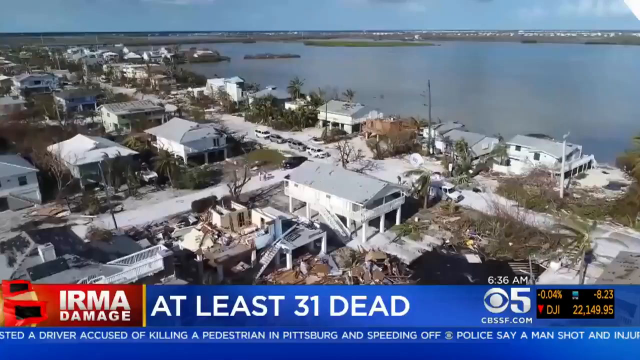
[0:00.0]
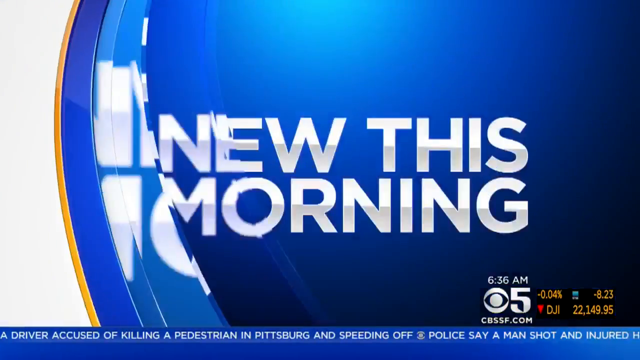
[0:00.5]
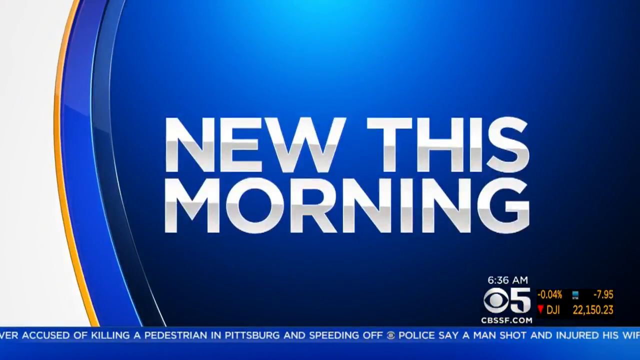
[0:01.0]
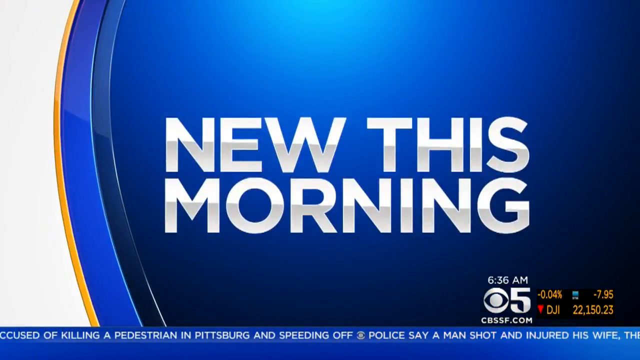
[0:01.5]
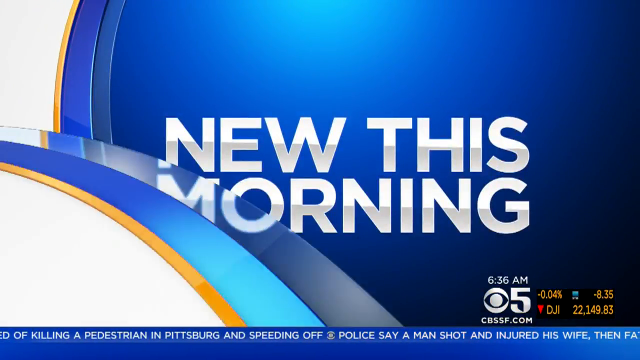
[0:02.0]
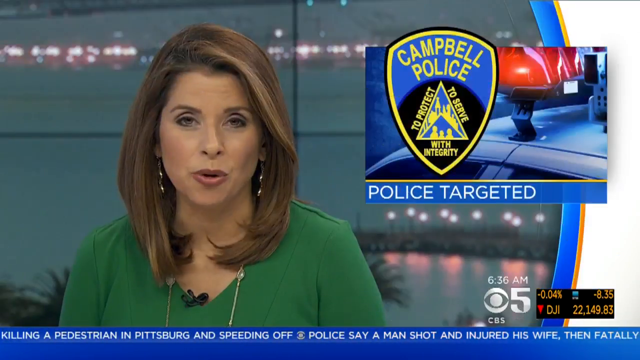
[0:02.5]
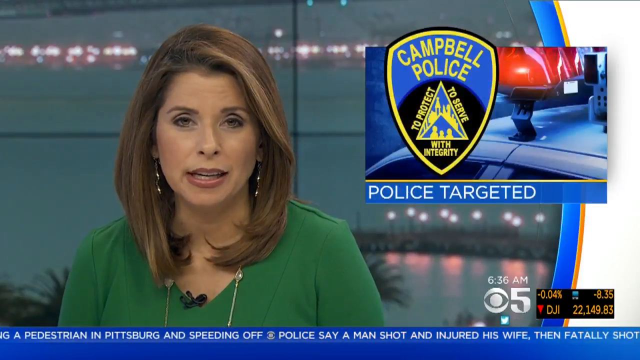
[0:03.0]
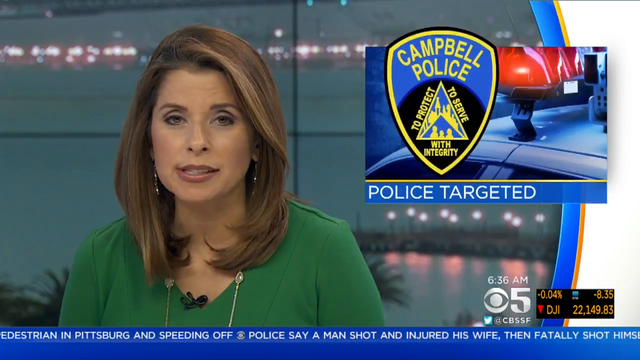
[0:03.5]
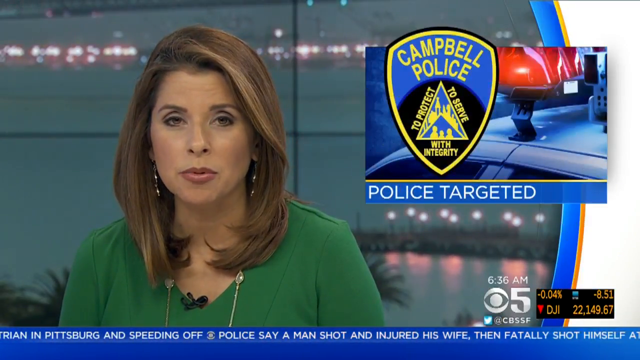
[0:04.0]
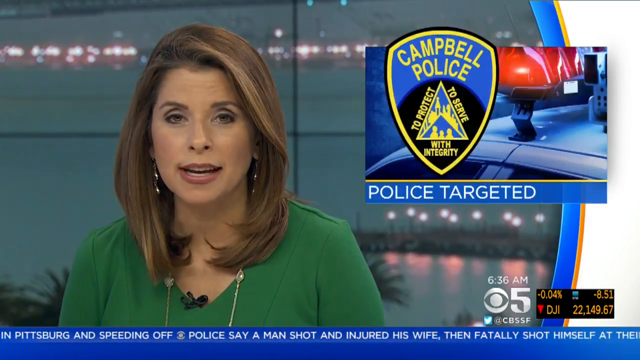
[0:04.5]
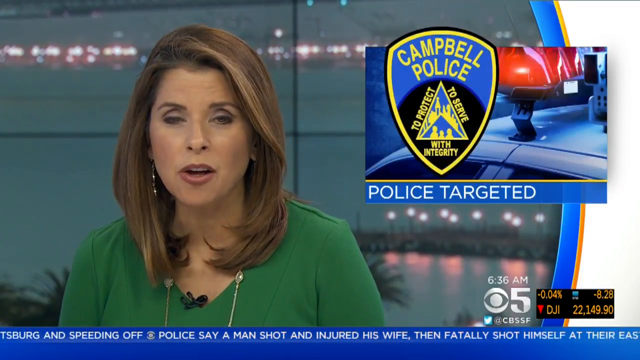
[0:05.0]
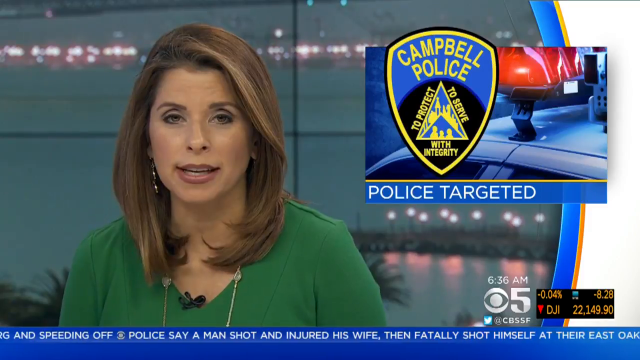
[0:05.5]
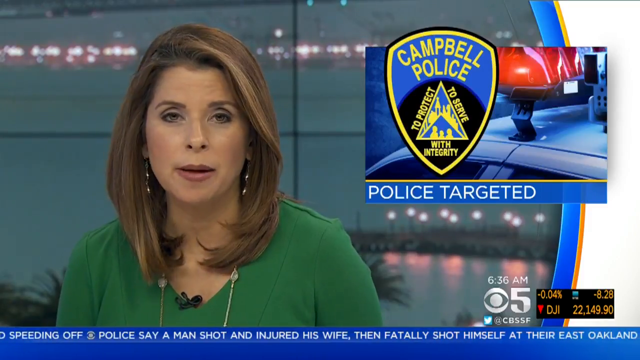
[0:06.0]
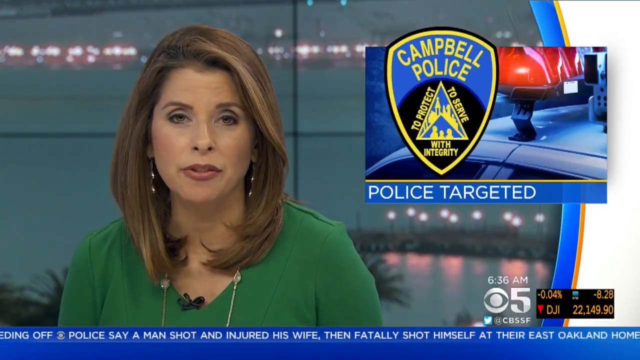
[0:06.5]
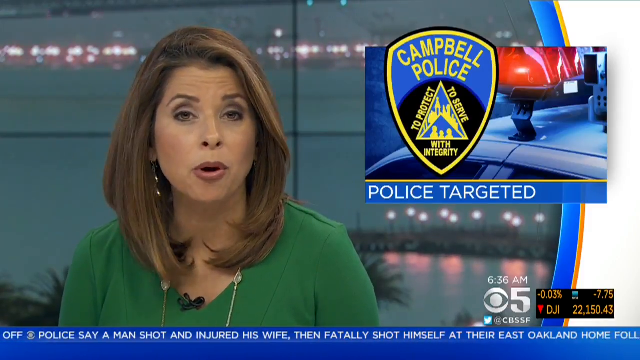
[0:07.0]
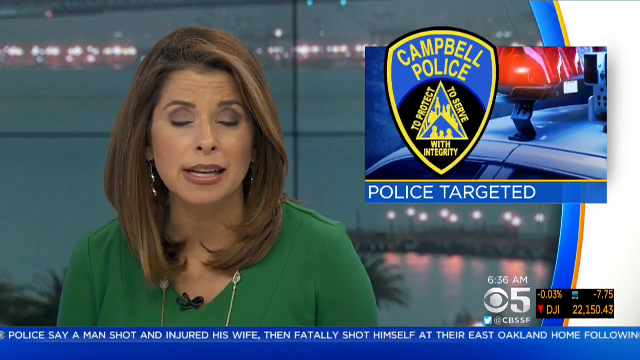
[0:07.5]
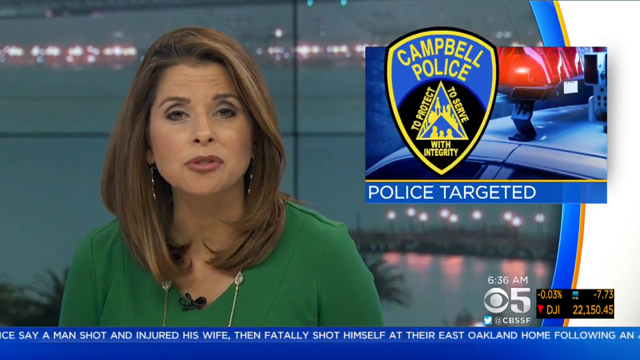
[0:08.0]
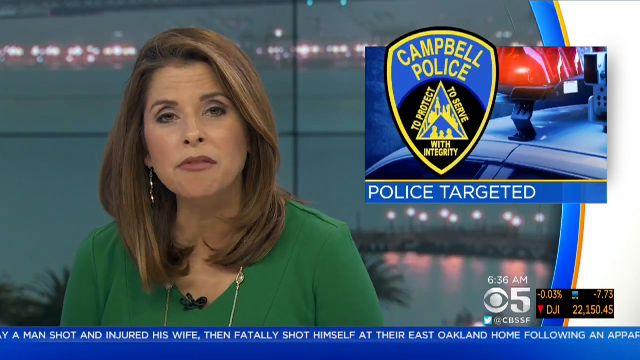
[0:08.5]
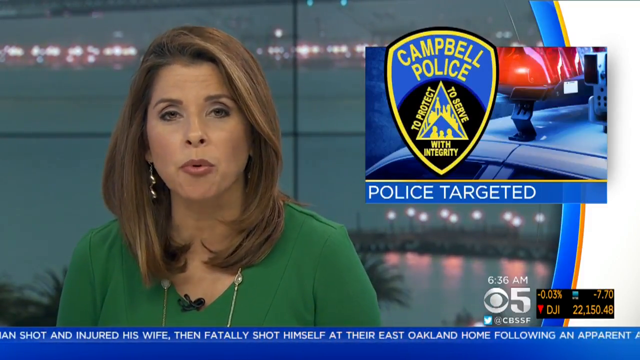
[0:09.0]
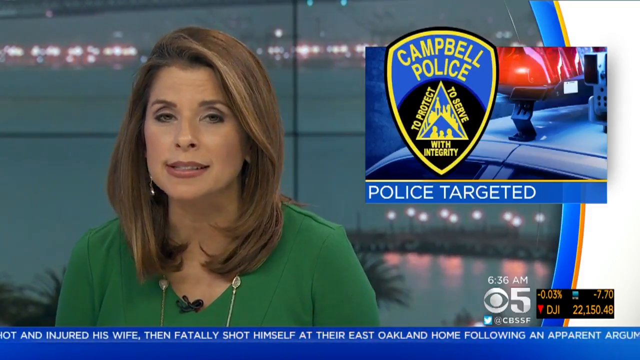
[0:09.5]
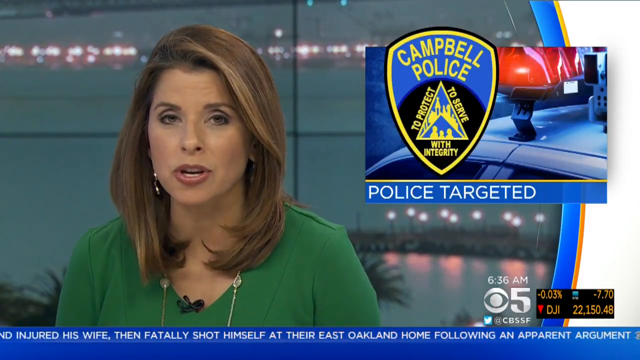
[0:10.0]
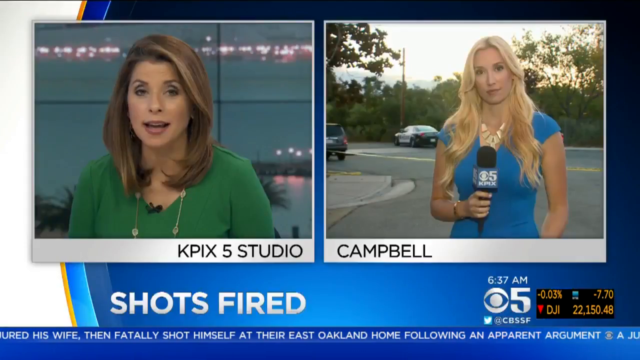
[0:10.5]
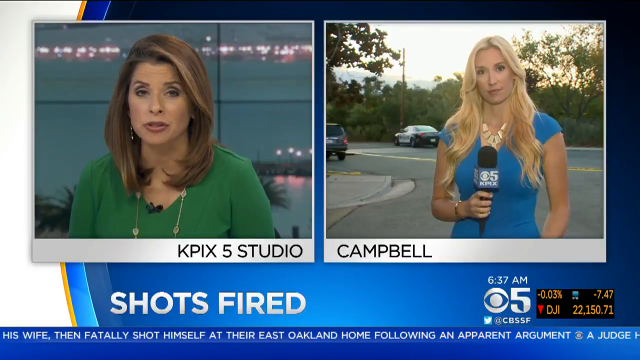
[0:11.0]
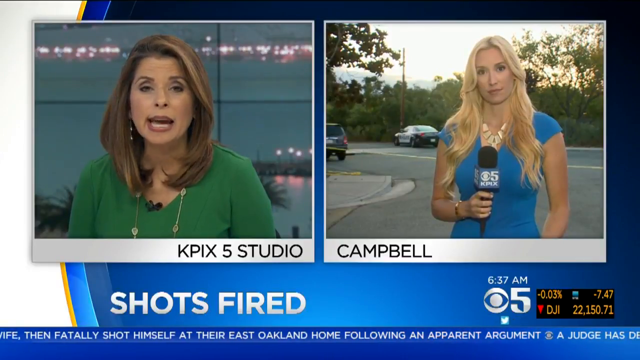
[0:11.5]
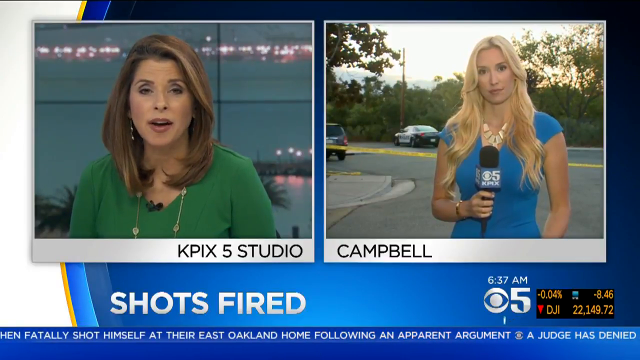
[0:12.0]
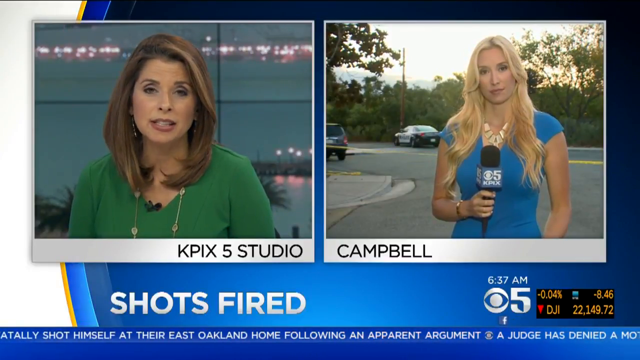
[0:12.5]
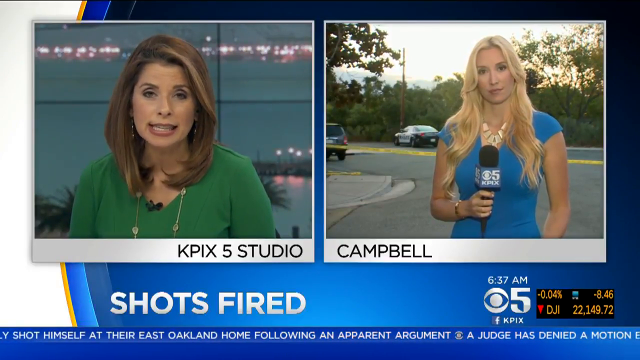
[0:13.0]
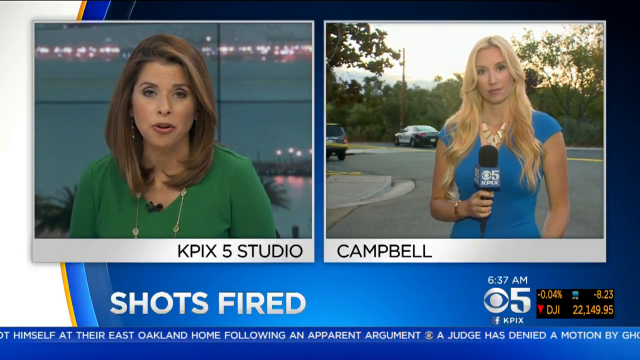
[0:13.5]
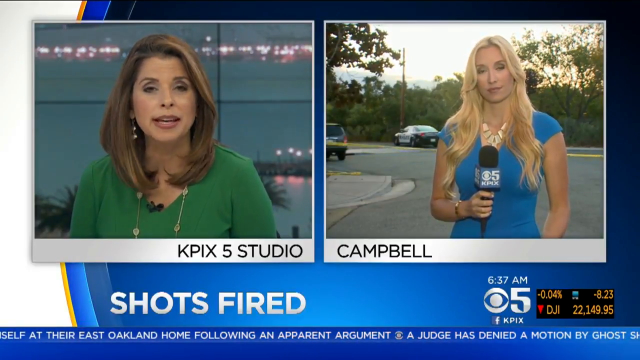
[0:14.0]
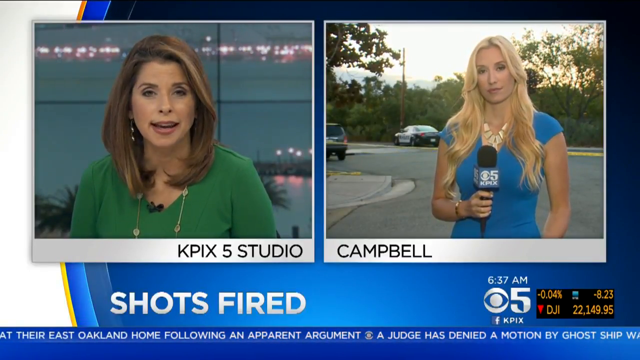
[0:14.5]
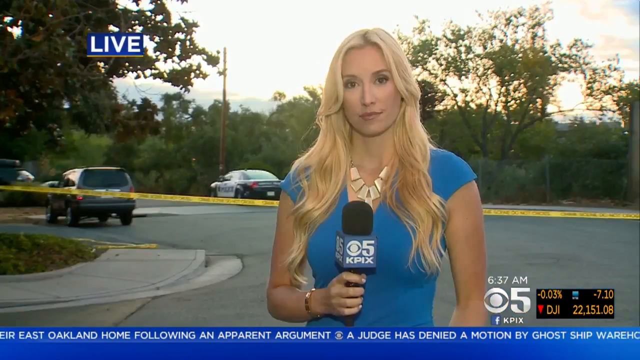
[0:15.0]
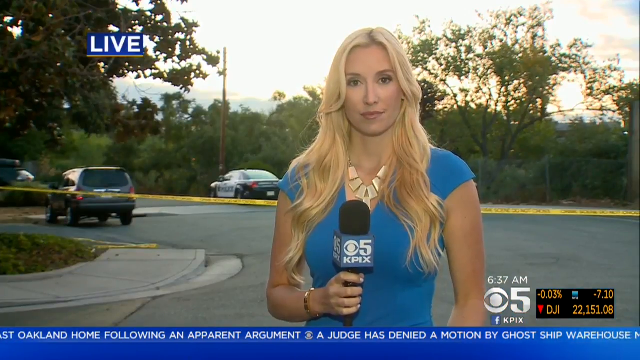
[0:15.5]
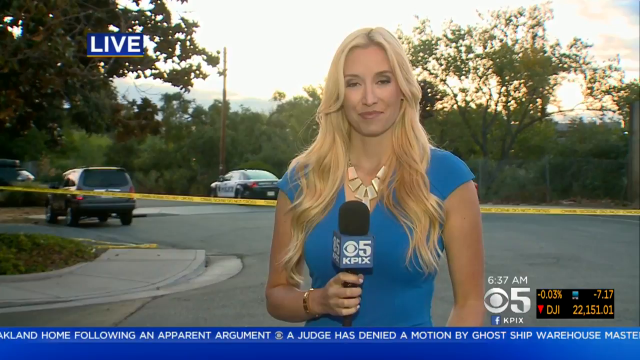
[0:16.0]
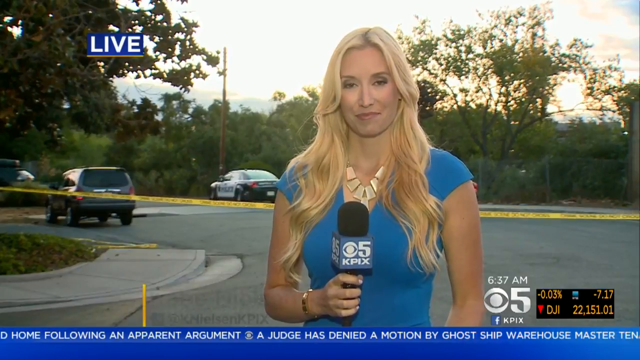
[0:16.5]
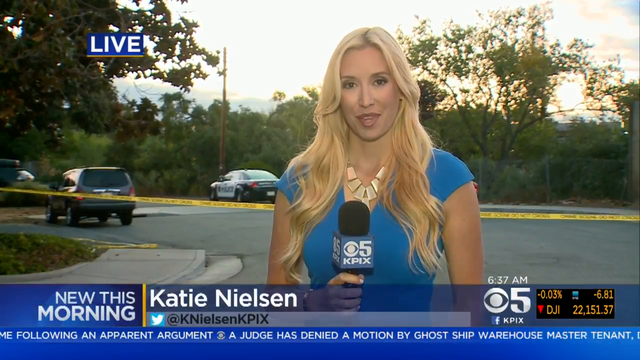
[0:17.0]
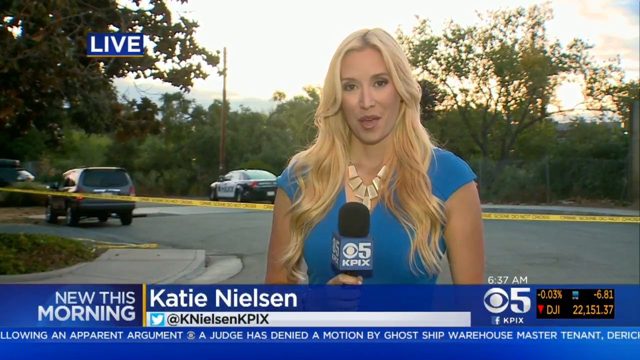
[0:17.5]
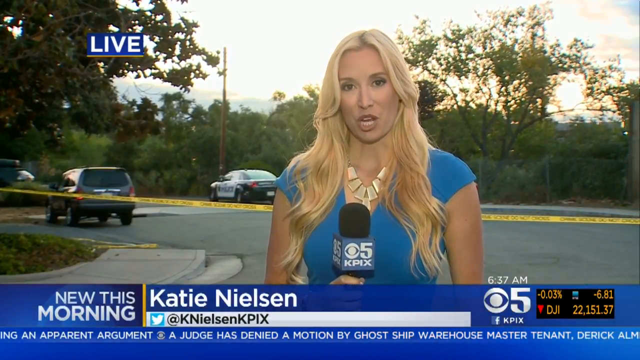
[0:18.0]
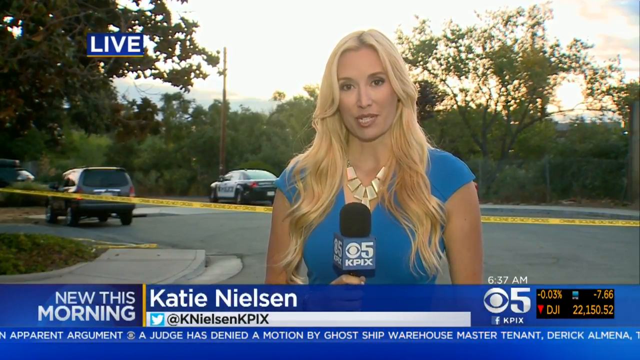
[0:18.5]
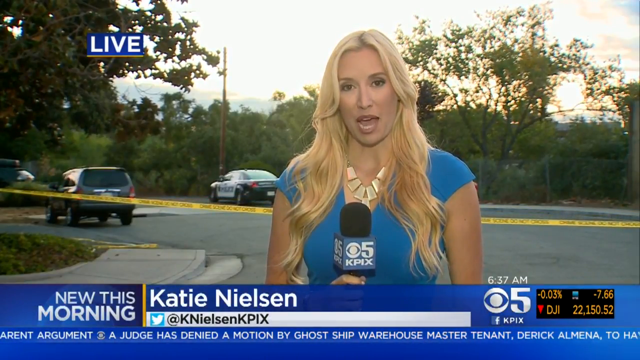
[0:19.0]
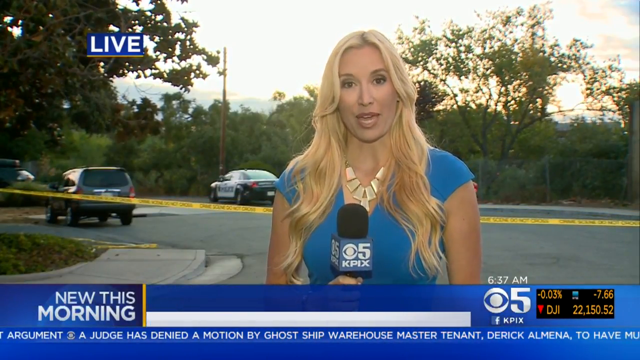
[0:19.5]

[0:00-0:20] A woman with brown hair sits in a news studio, wearing a green dress and earrings. On the left side of the screen is a police badge that reads "camp bell police to protect to serve with integrity," along with a police van bearing the text "police targeted." The woman is presenting the news from the KPIX 5 studio. The screen then shifts to a woman named Katie Neilson, reporting live on Camp Bell under the heading "shot fired." She wears a blue dress and a necklace, has long white hair, and carries a microphone in her right hand. The news is being reported at 6.37am on channel KPIX 5. The story seems to be about a shooting involving police and criminals.